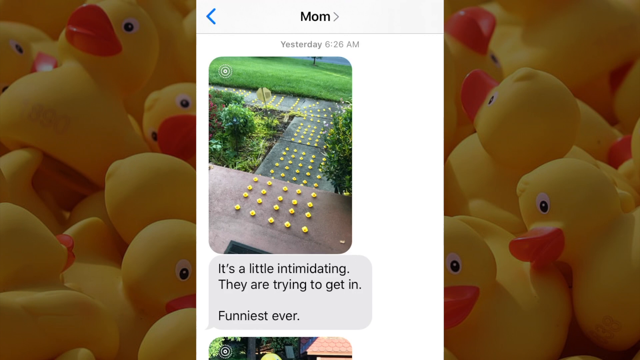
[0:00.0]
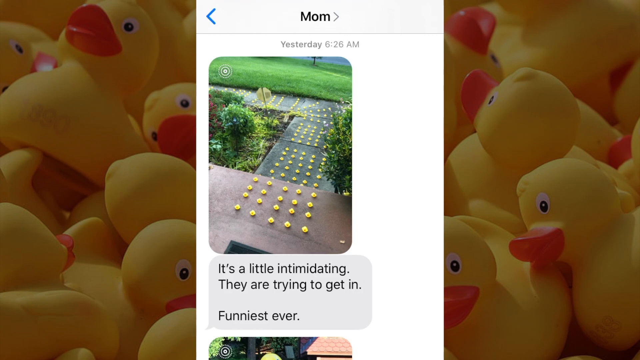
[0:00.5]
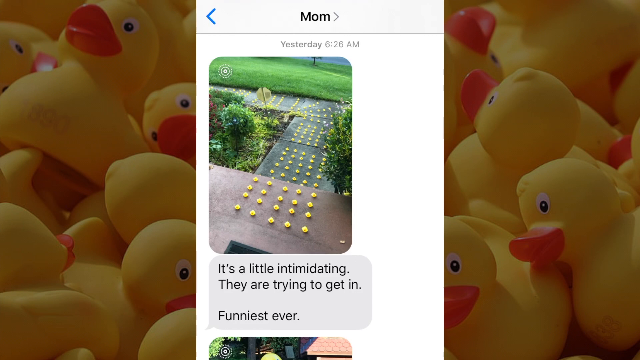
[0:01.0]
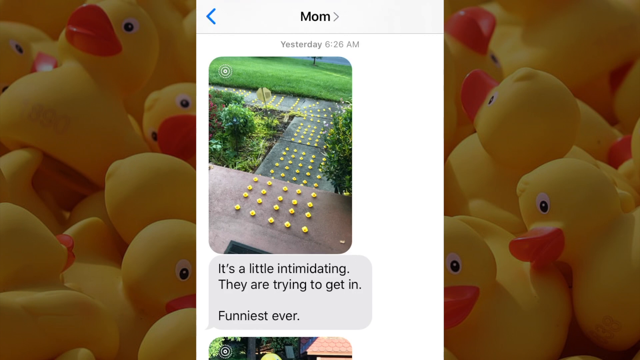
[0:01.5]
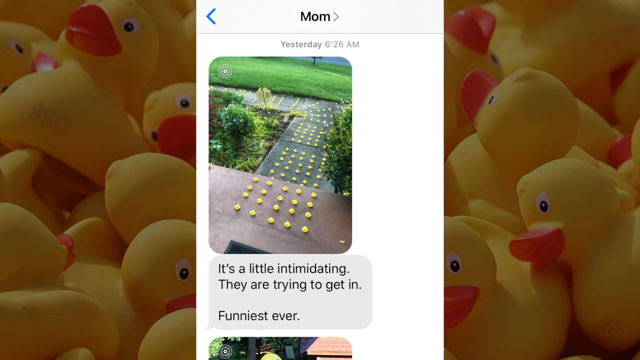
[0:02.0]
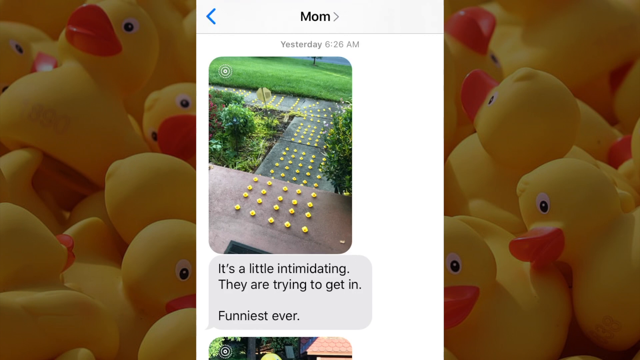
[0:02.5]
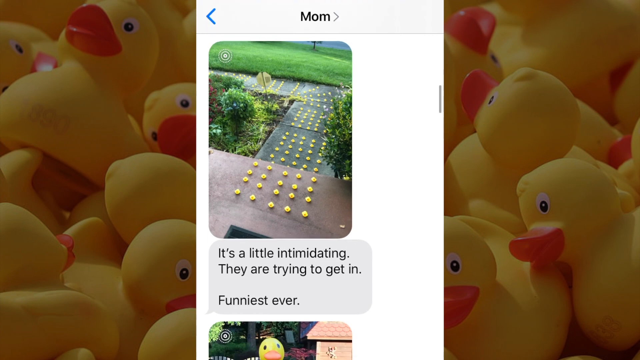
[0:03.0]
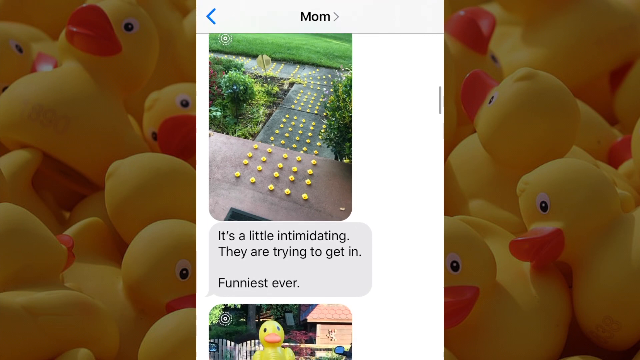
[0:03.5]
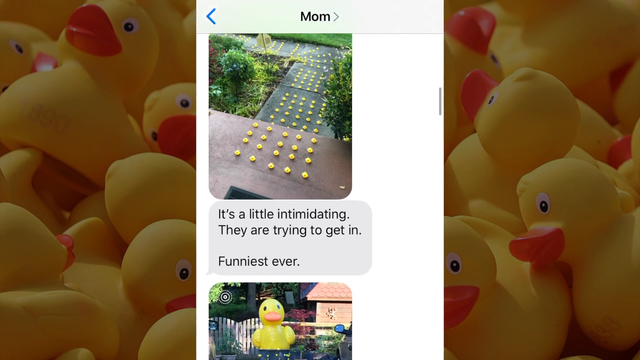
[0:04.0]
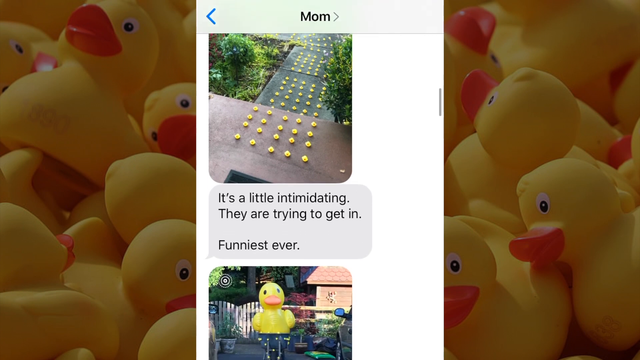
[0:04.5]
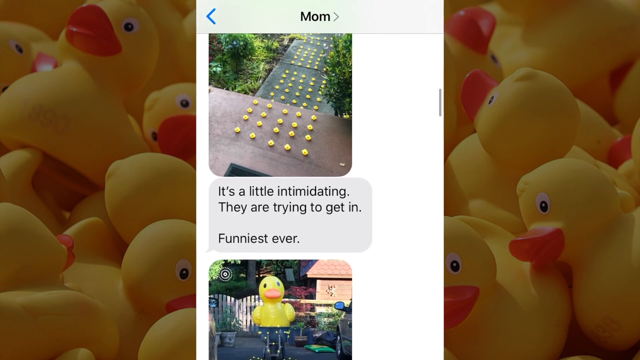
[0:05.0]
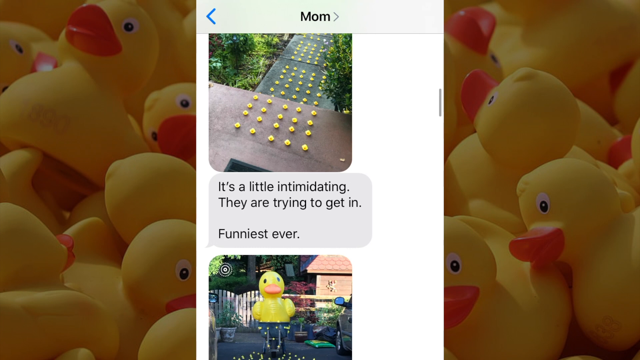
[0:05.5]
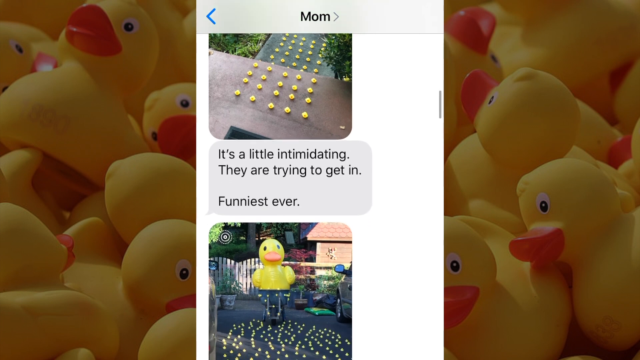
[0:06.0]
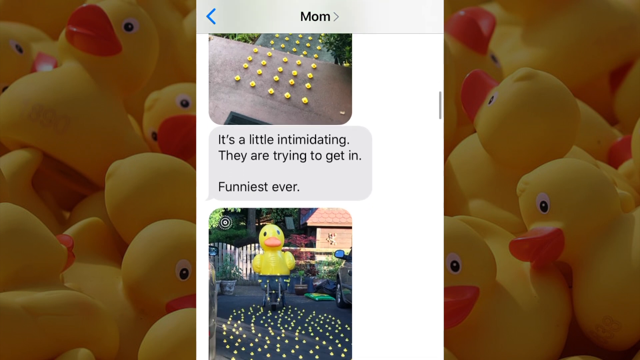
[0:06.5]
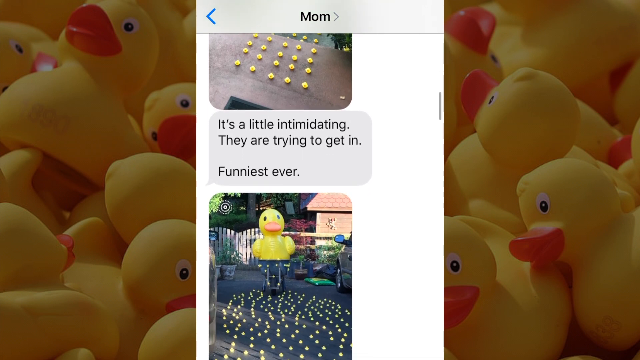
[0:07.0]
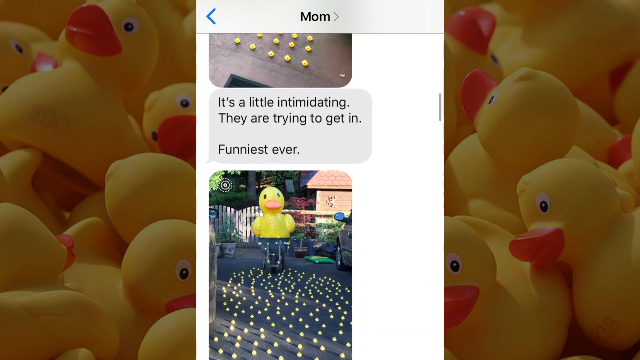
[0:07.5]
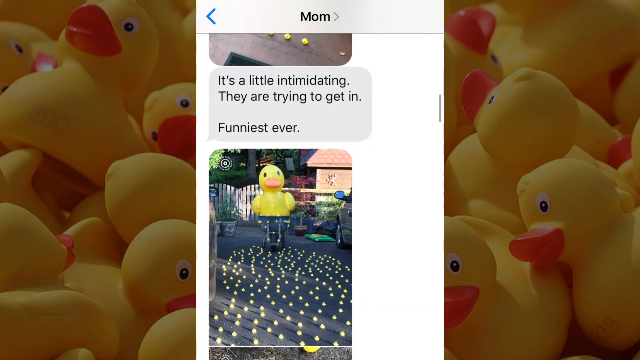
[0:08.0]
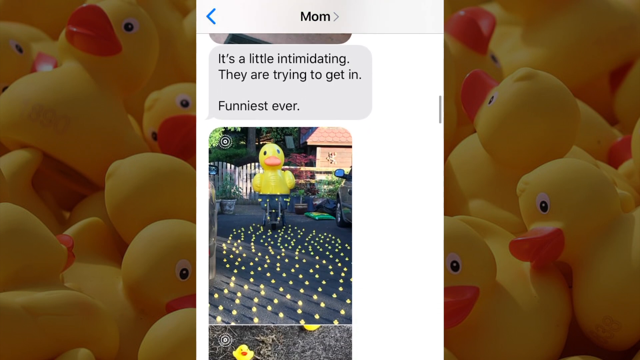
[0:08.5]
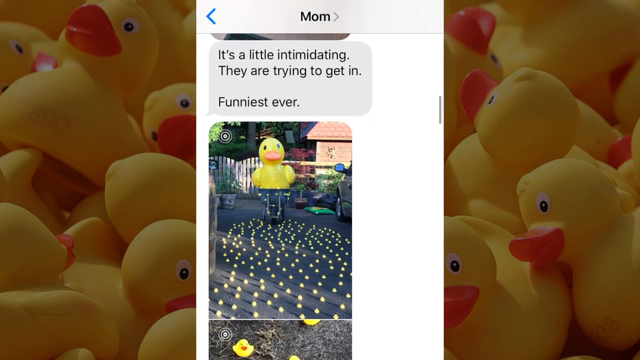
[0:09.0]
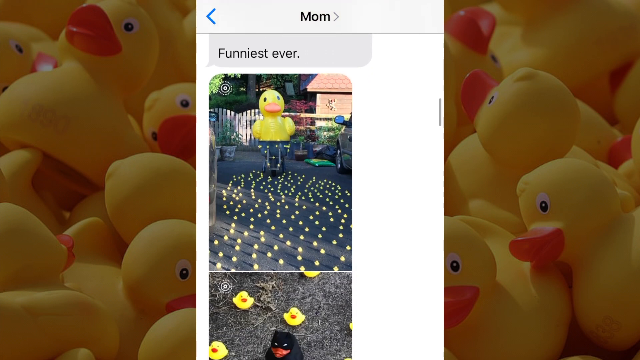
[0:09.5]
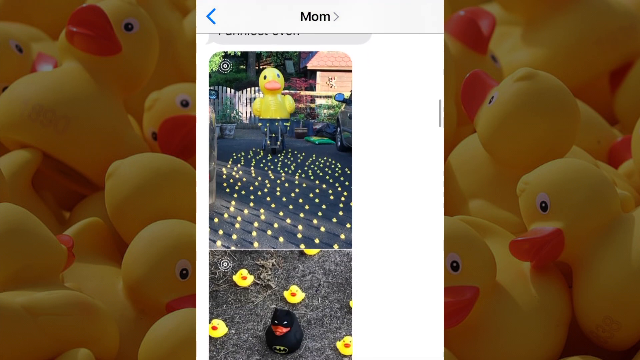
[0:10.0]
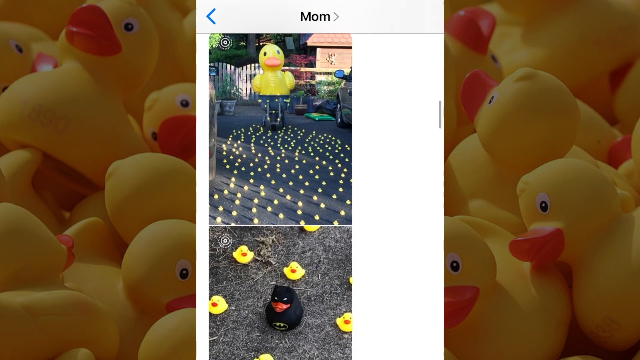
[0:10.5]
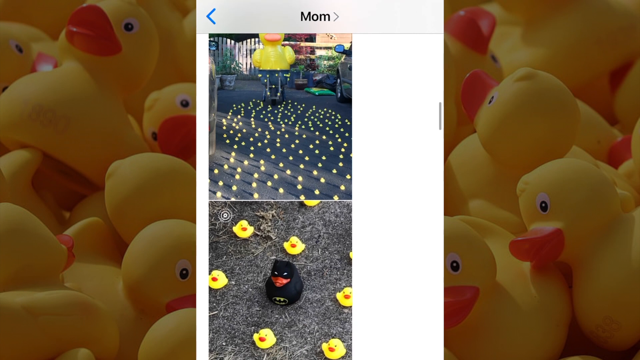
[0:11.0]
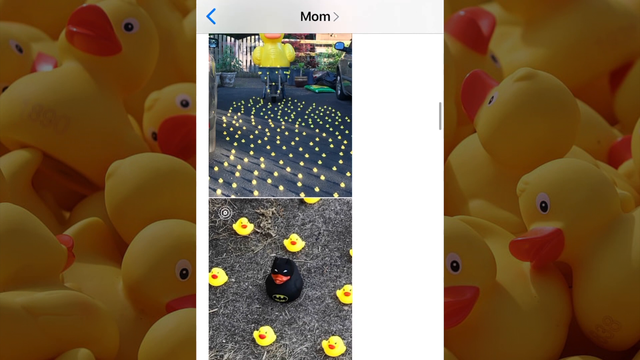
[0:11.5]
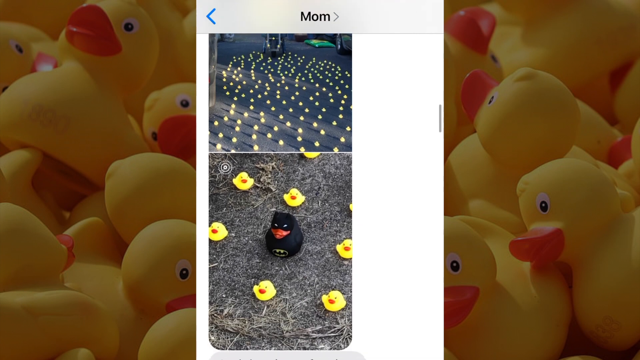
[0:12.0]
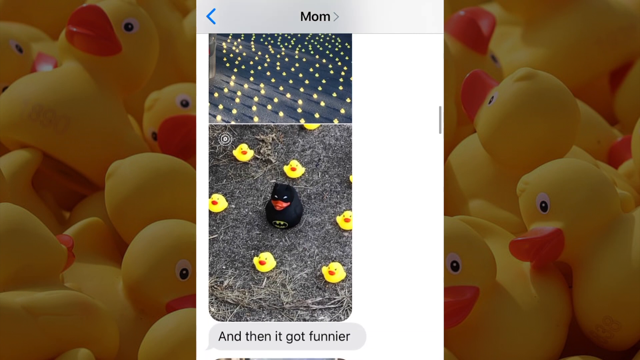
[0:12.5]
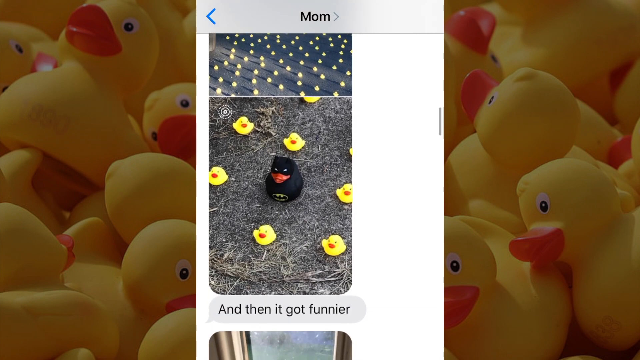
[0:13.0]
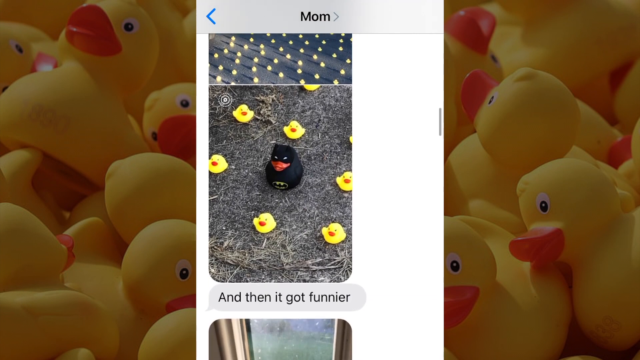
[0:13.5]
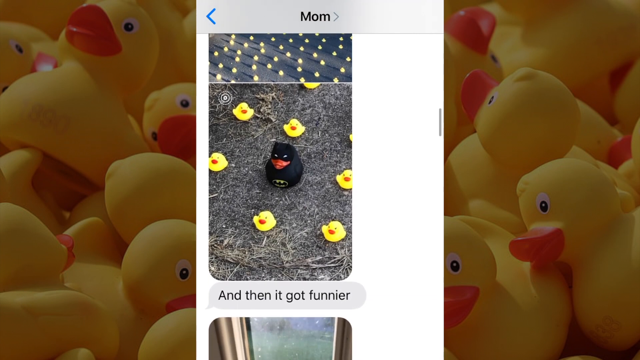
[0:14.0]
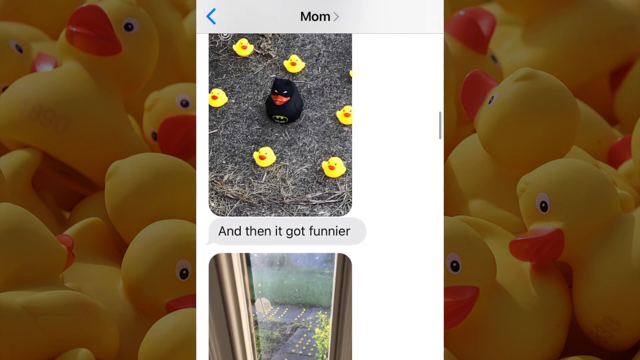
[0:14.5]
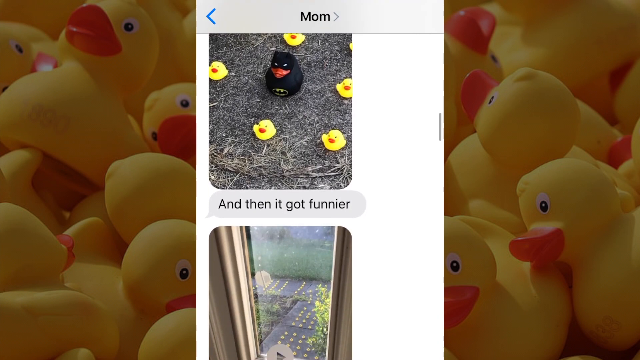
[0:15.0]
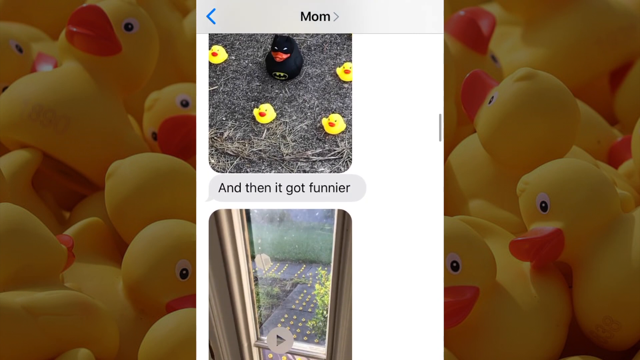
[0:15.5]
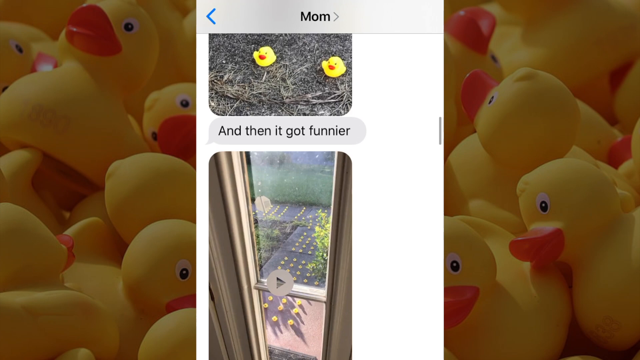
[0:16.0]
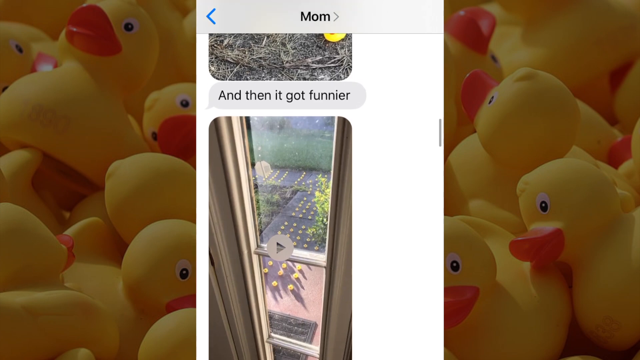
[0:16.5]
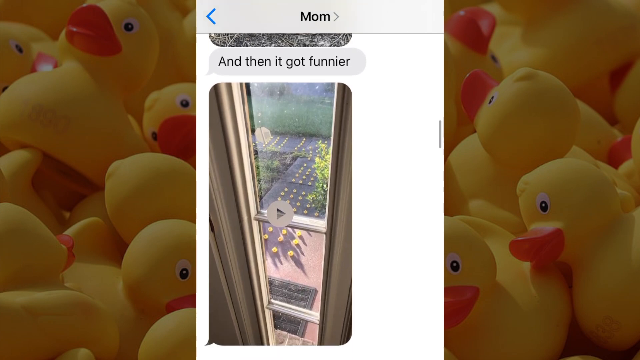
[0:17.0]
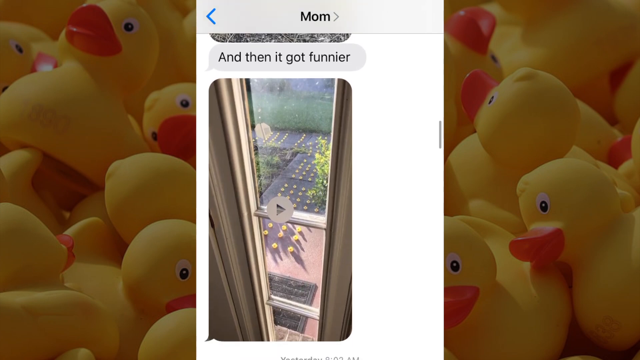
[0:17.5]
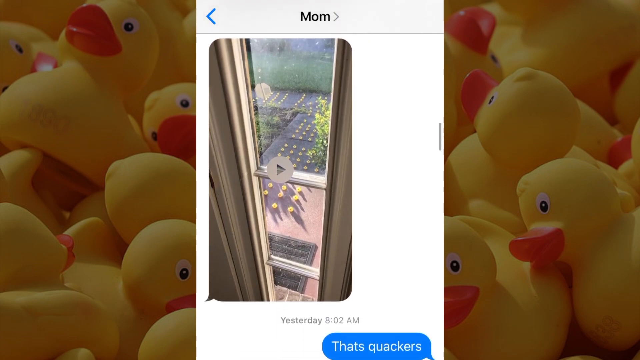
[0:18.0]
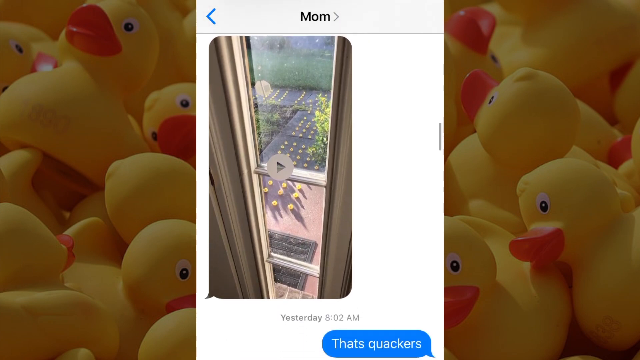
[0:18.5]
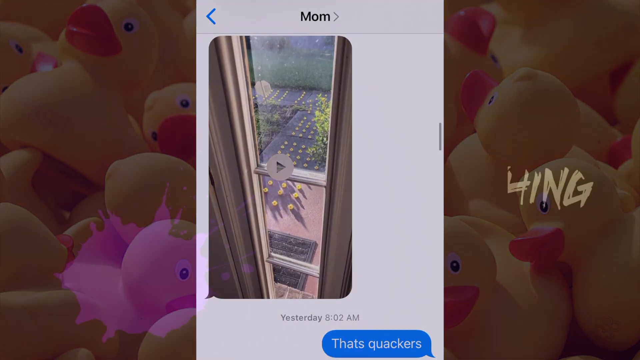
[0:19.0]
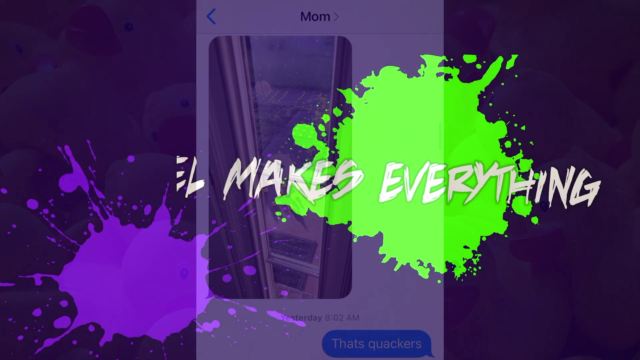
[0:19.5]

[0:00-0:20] The video opens on a background of a bunch of rubber duckies, with some sort of communication post in the center that has the word "mom" written on top. A picture shows an army of rubber duckies lined up on the street and in a walkway, and at the bottom a note reads "it's a little intimidating, they are trying to get in, funniest ever." Next comes a picture of a giant rubber ducky in a driveway with another army of small rubber duckies in front of him. As the view scrolls down, a black rubber ducky appears, surrounded by six yellow rubber duckies, followed by another note reading "and then it got funnier." The next picture that scrolls up shows somebody looking out a window; the person is not visible, but the army of rubber duckies is parked in the street and in the walkway. A screen then shows the words "Michael makes everything" on a black and purple background with green and purple paint splattered all over it.